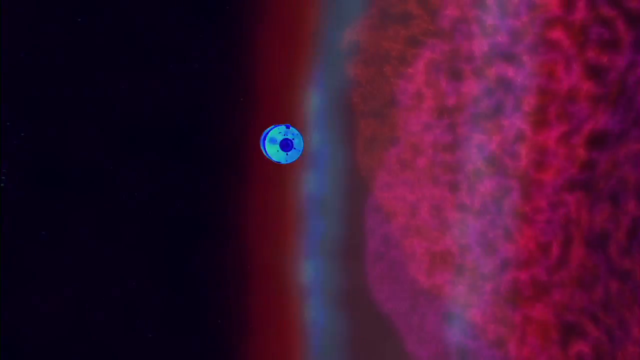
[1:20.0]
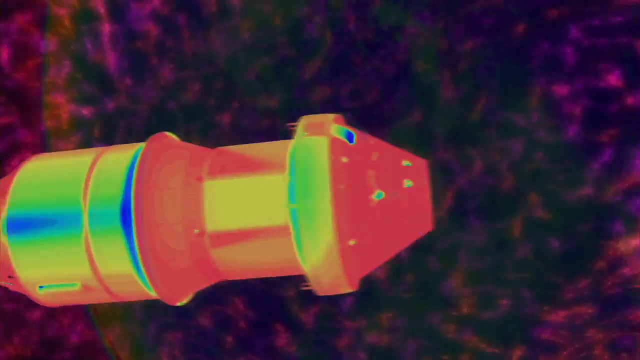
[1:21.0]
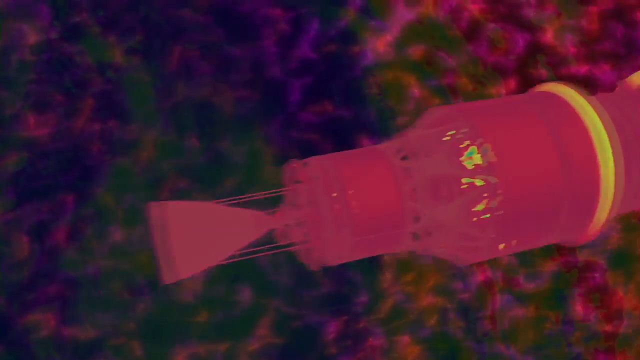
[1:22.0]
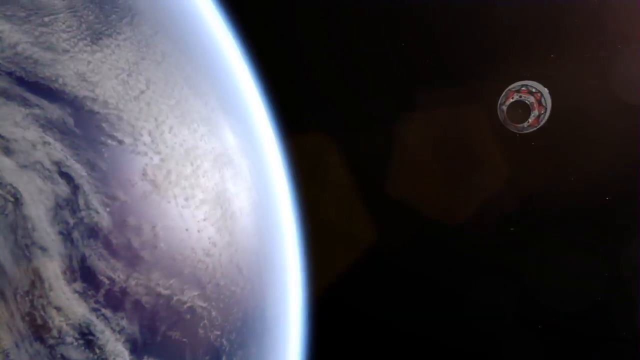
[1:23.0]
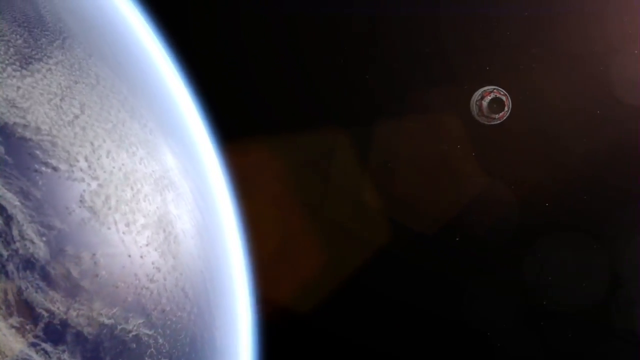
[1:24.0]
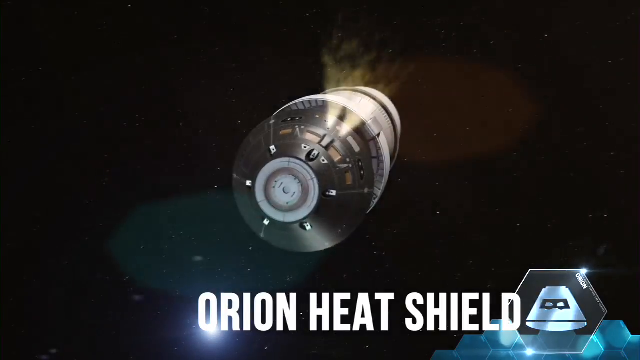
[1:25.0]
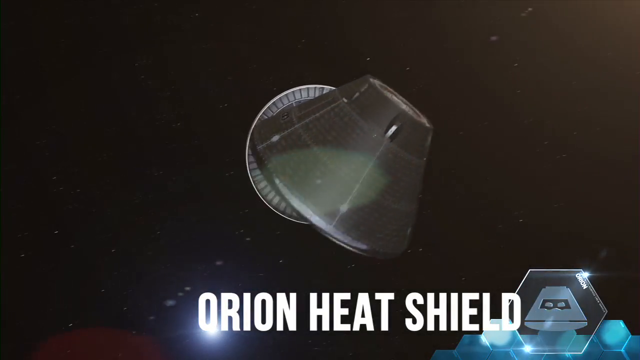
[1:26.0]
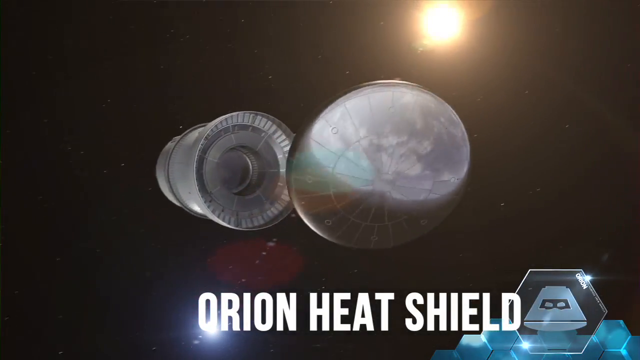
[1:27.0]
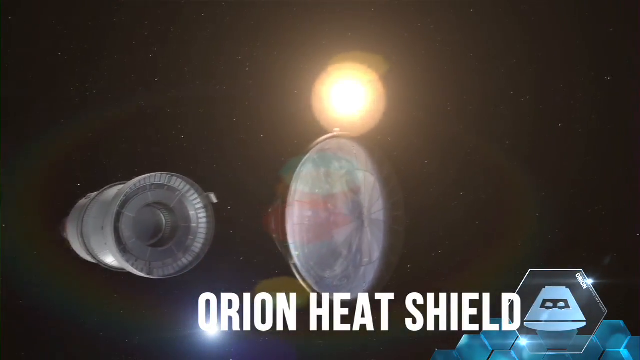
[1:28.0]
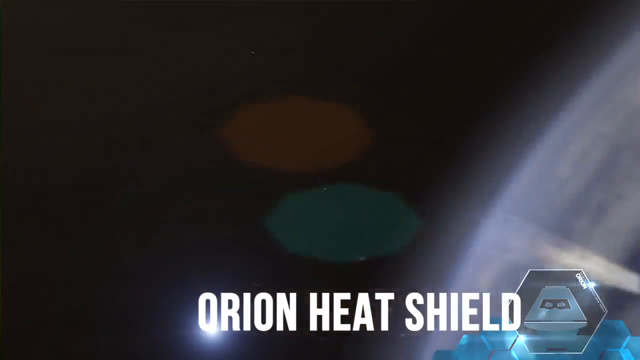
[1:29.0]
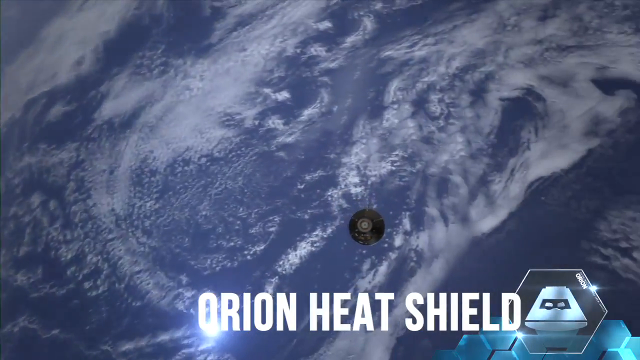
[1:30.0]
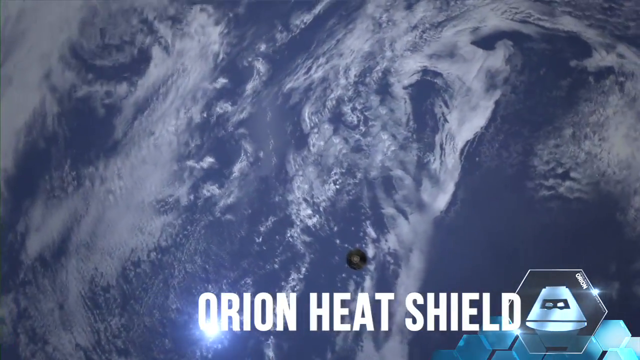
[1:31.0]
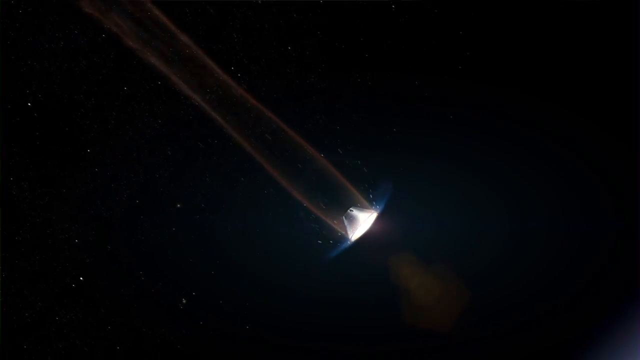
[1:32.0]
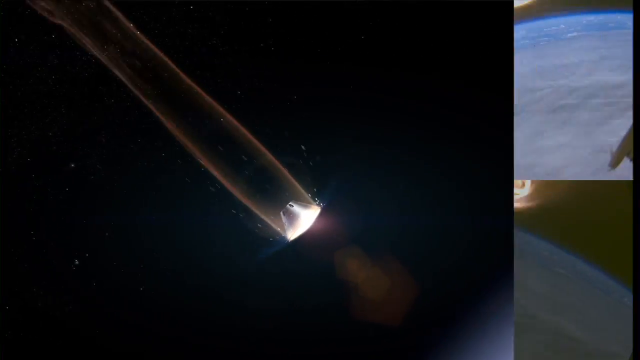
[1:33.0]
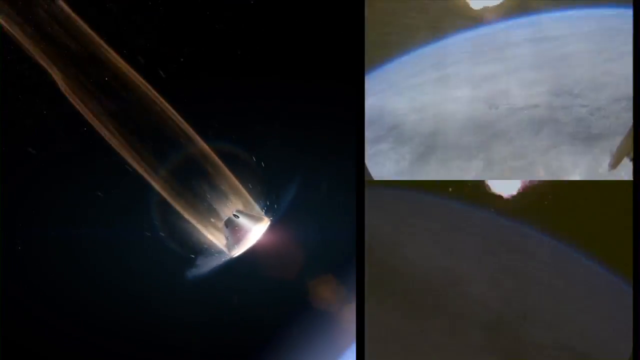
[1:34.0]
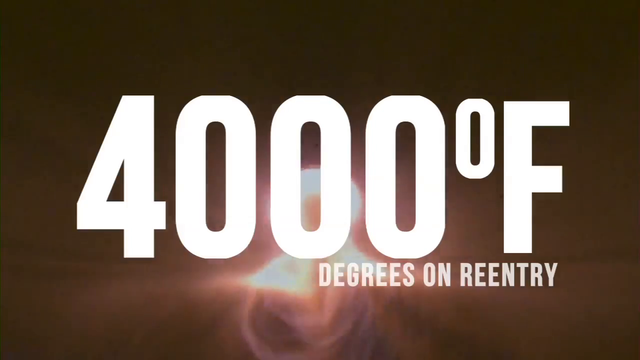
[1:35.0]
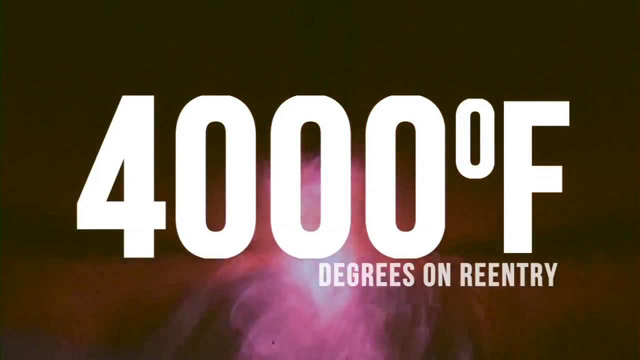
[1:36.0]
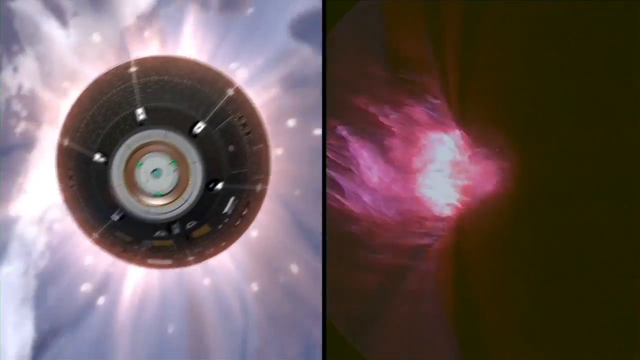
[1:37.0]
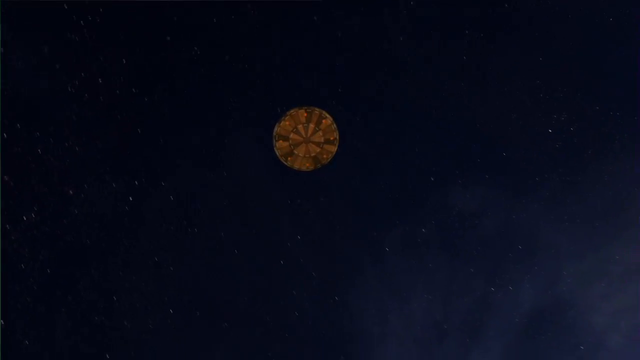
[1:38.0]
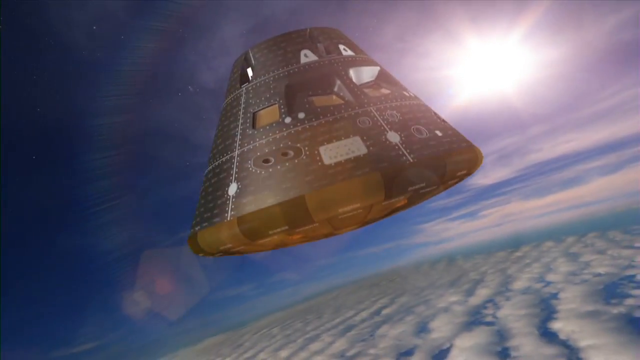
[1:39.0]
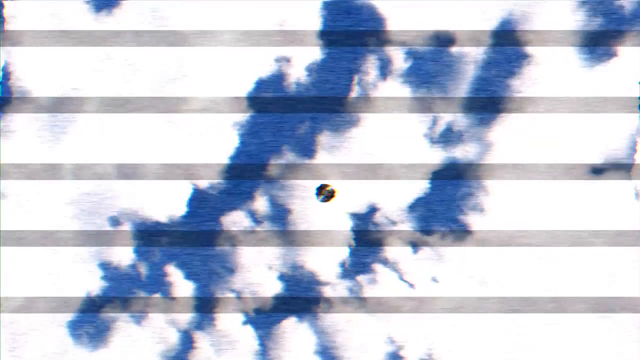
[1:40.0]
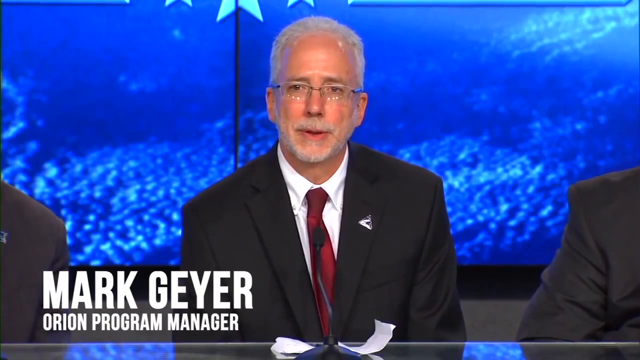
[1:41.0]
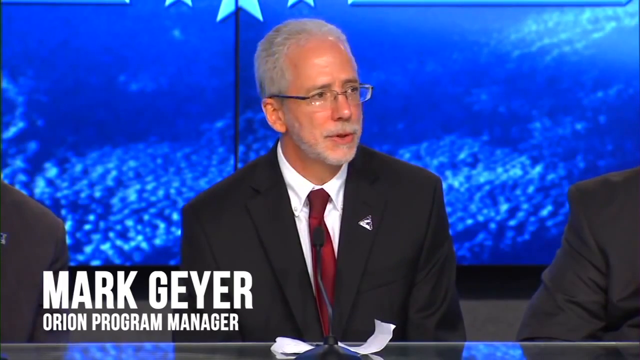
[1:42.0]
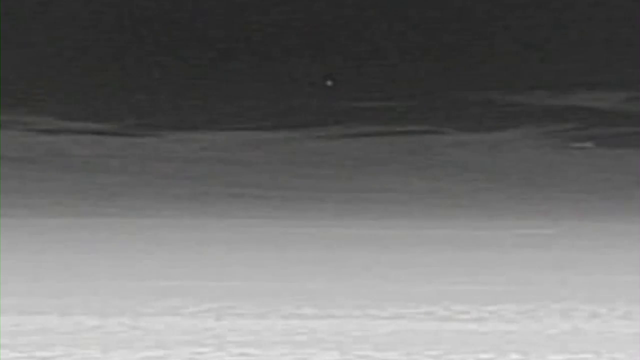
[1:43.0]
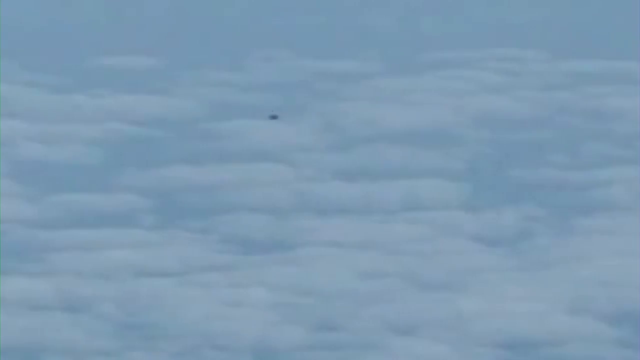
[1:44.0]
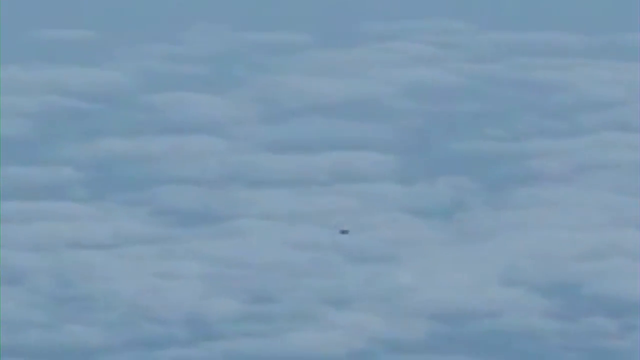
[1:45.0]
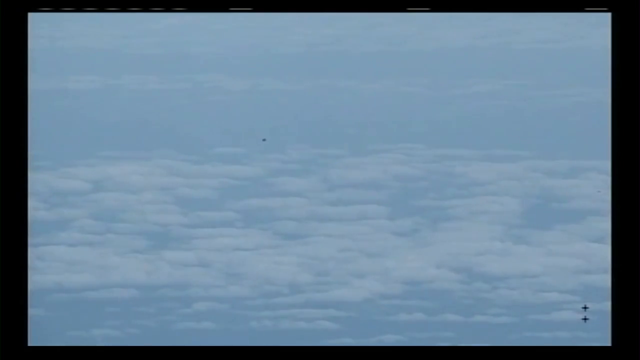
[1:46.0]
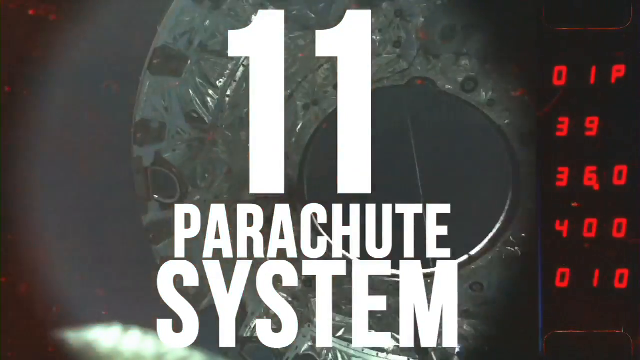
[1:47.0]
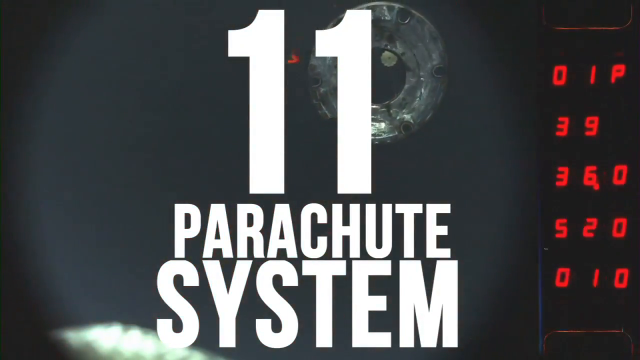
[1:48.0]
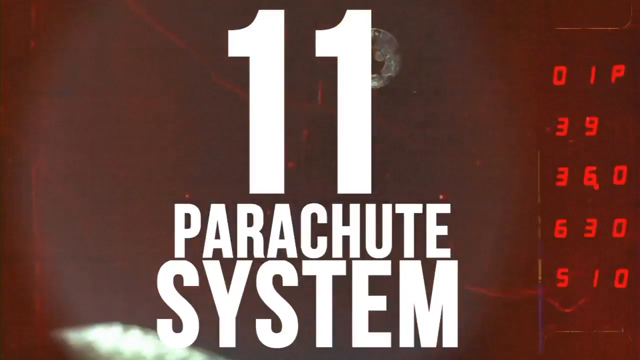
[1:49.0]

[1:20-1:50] A simulation shows different heat colours across the capsule as it goes around the radiation belts in space: the front cone is very red, while the central area is more green or yellow. A side view follows, with the front cone distinctly orangey-red and the centre more yellow. The front nose, the Orion heat shield, then detaches from the capsule and makes its way back down to Earth; it has little boosters. On-screen text states that the re-entry temperature will be 4000 degrees Fahrenheit. A simulation shows its descent to Earth. Interview footage follows with the Orion programme manager, Mark Geyer, and the footage shows it descending to Earth. The heat shield at the front of the capsule has an 11-parachute system attached to it.